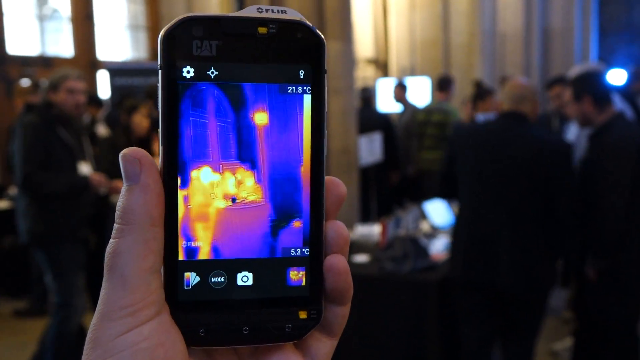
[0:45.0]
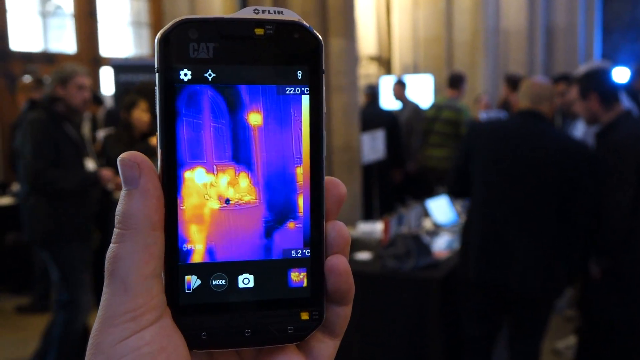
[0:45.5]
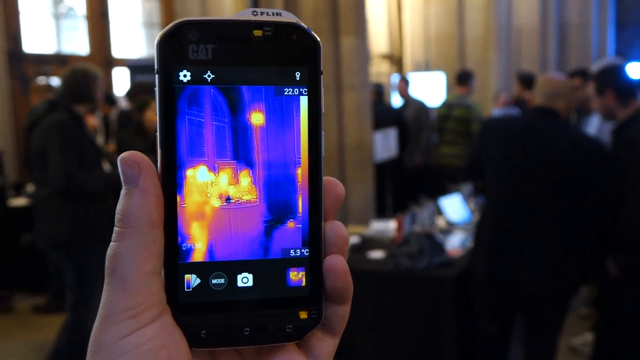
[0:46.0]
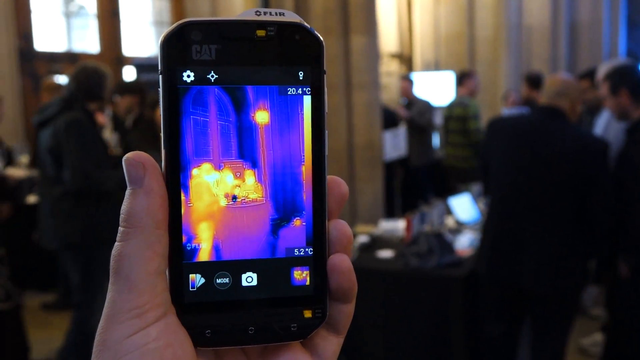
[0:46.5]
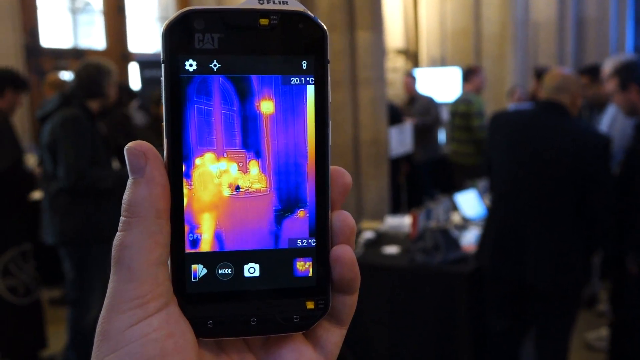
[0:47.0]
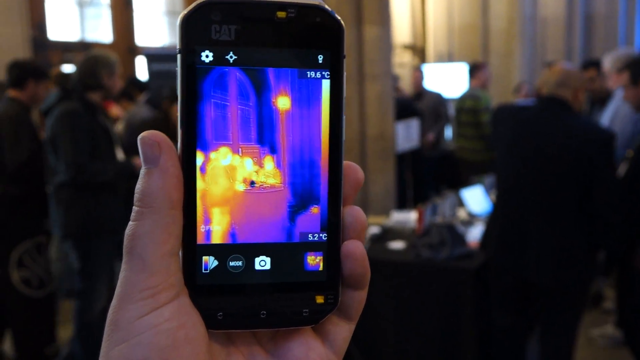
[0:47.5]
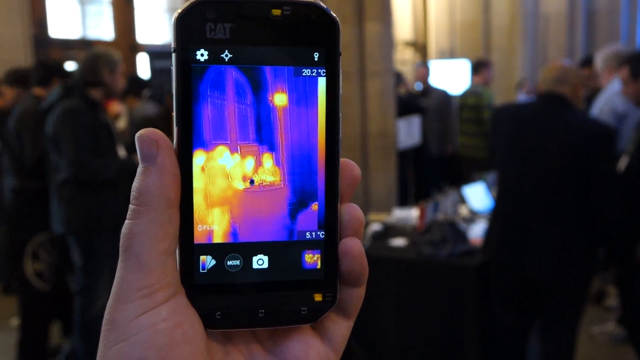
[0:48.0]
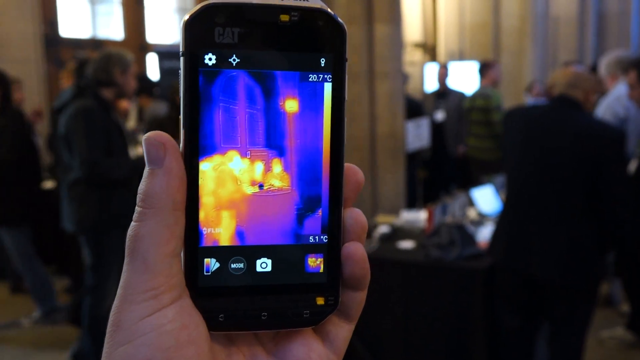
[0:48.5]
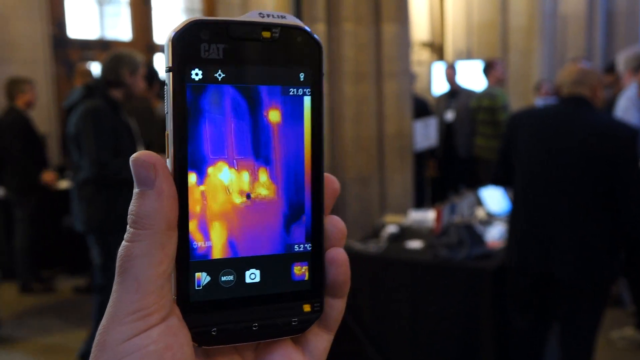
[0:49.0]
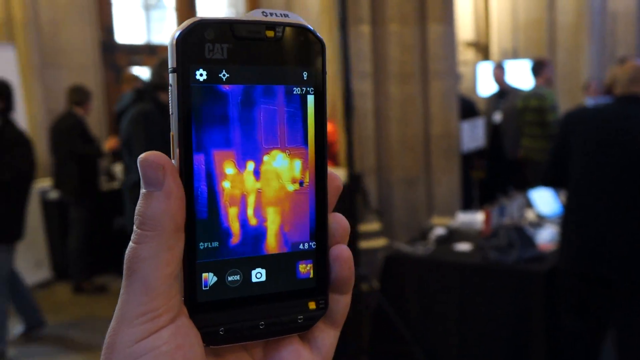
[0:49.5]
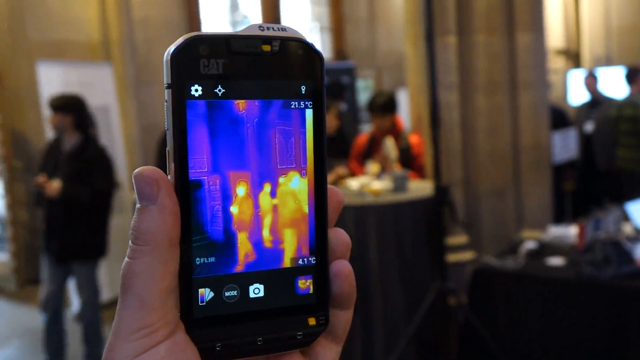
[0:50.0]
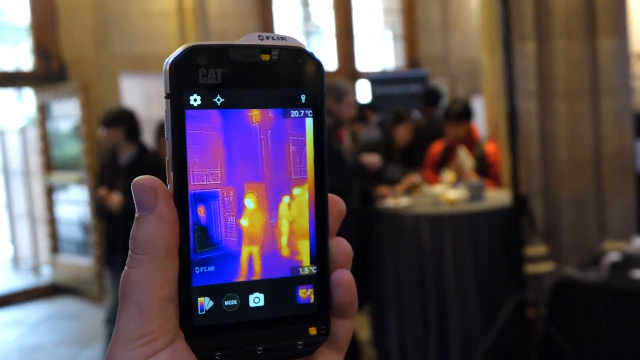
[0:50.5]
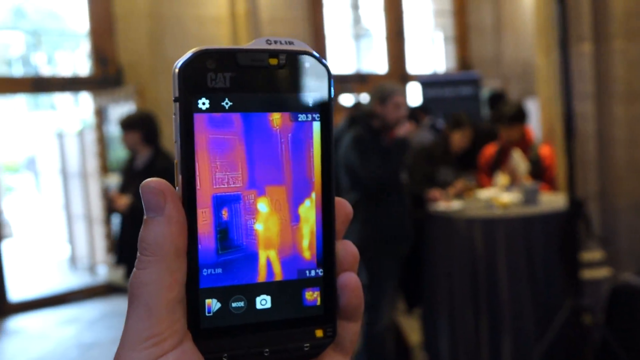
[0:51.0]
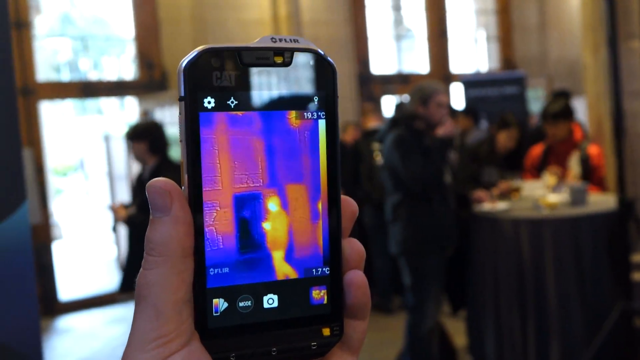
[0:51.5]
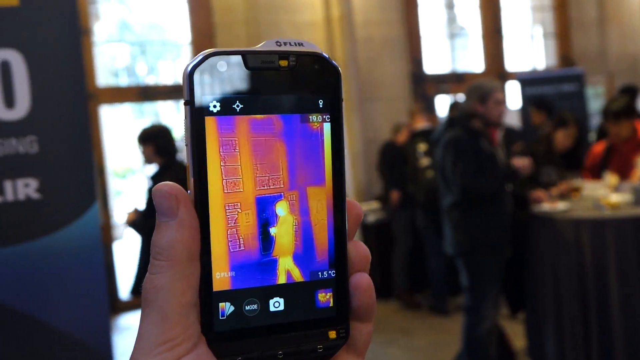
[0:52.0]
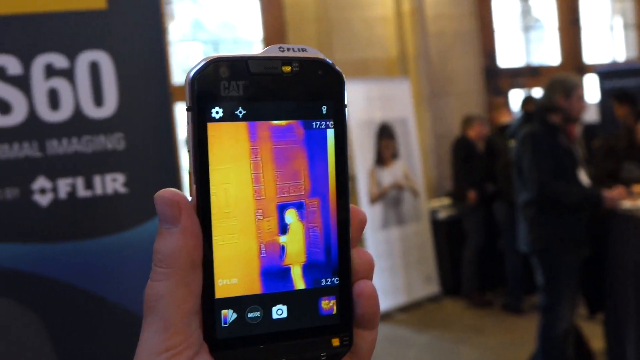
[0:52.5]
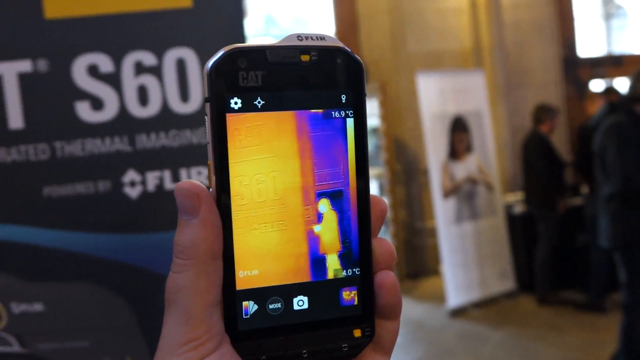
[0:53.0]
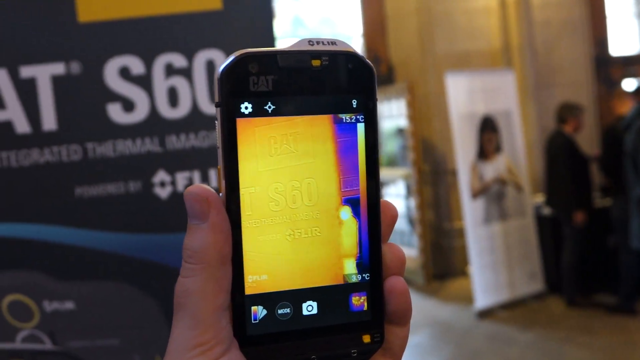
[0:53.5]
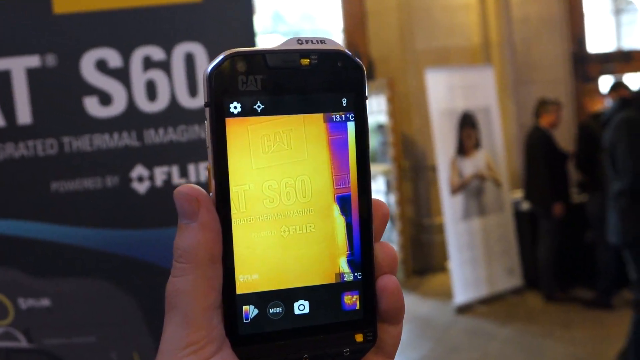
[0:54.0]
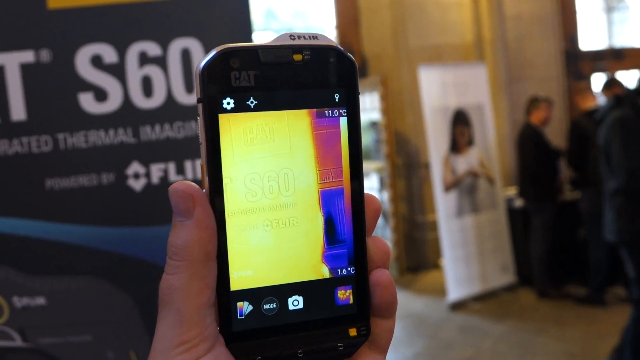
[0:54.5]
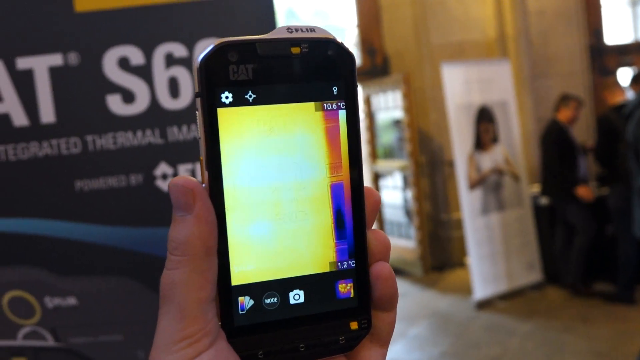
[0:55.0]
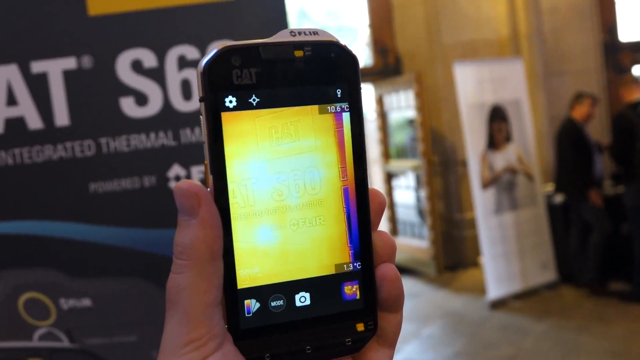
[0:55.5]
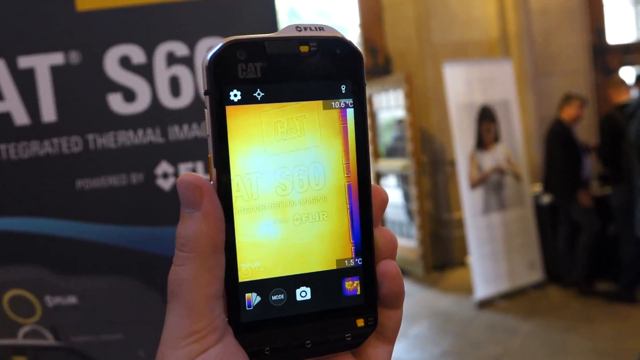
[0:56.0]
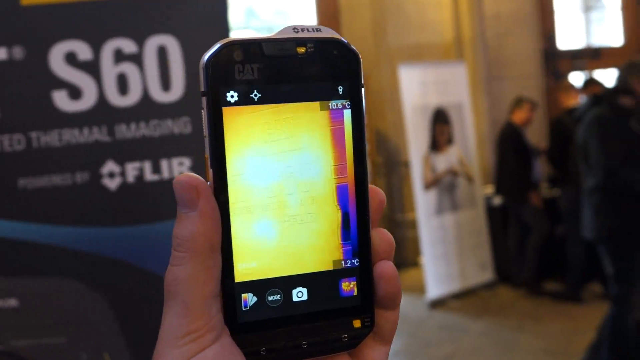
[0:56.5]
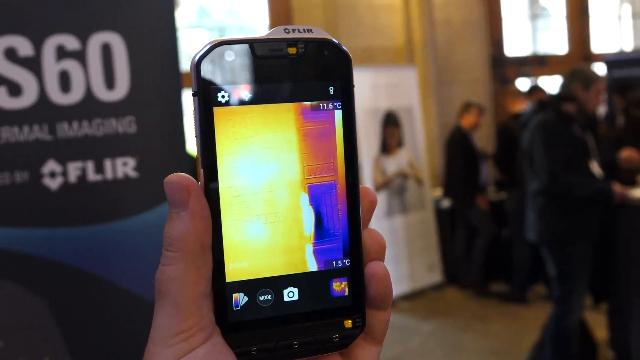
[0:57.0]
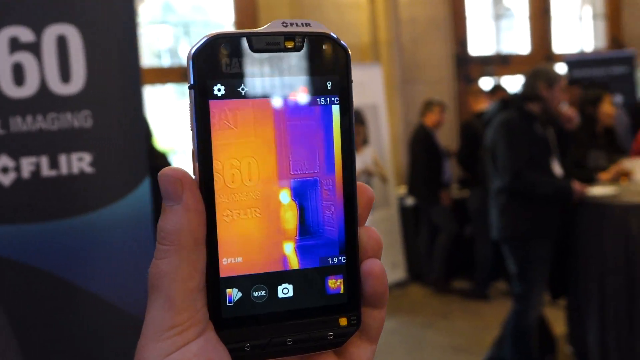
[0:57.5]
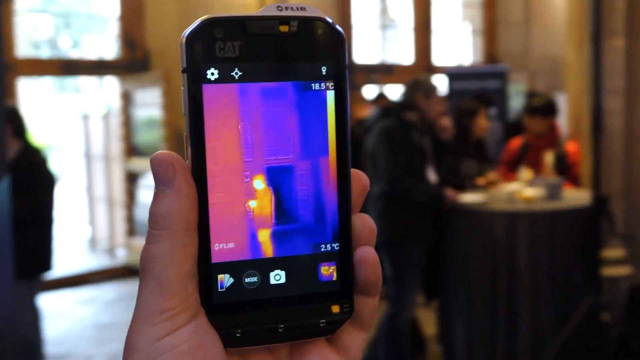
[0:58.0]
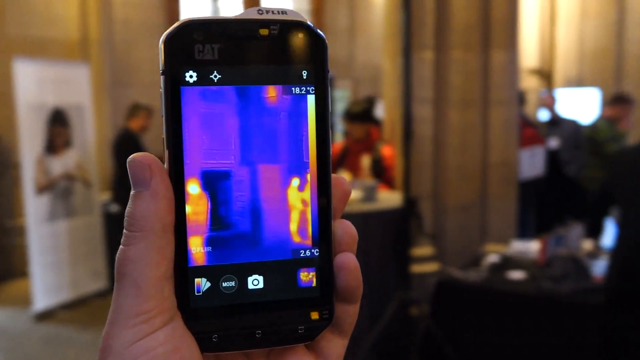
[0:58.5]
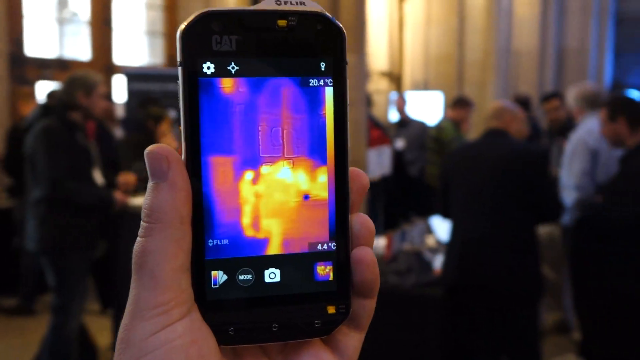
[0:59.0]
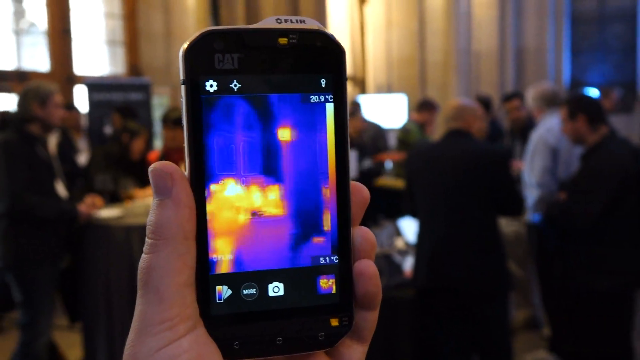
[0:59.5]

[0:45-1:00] The man still holds the thermal imaging device in his left hand, pointing it at people. He slowly pans to the left, revealing an open door with daylight and sun pouring in. He then holds the device in front of what looks like a poster or advertising on a wall, and the whole screen turns yellow. The advertising has a black background with white lettering, but through the thermal imaging it is all yellow. It shows "cat", the letters "S60", and the words "integrated thermal imaging" and "FLIR". The advertisement appears to be for the device he is holding, suggesting the event may be a showcase for it. He then goes back to holding the device up and looking at people through the screen.